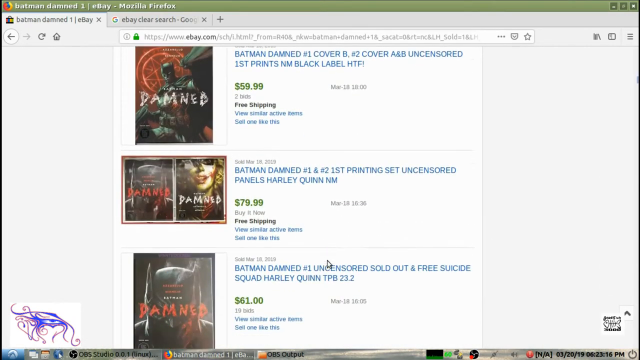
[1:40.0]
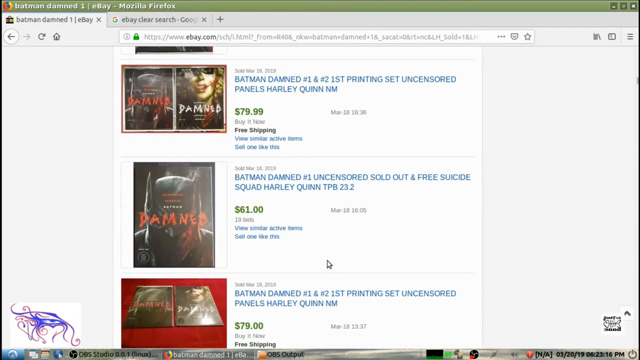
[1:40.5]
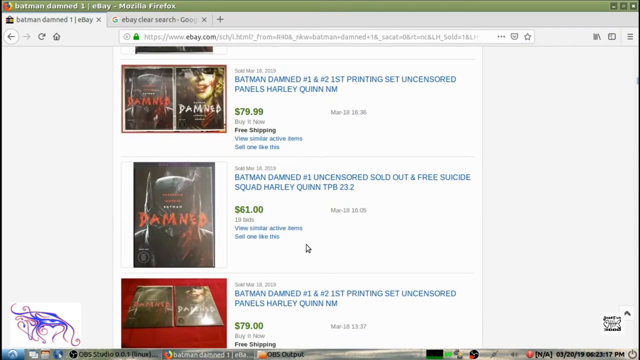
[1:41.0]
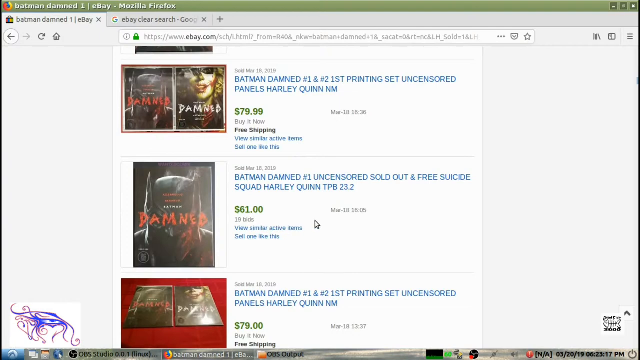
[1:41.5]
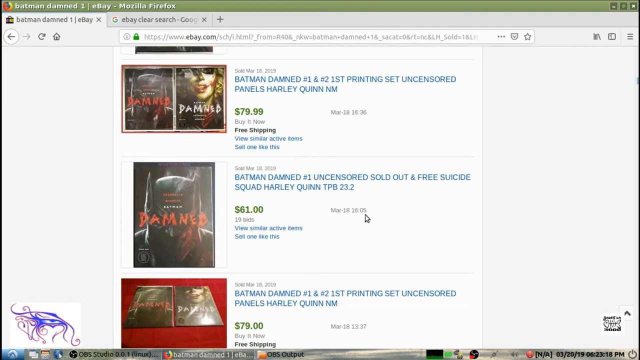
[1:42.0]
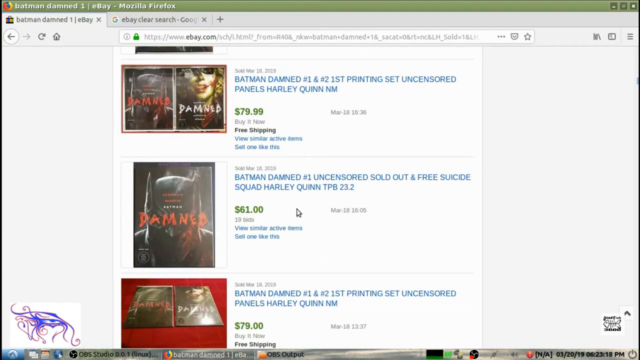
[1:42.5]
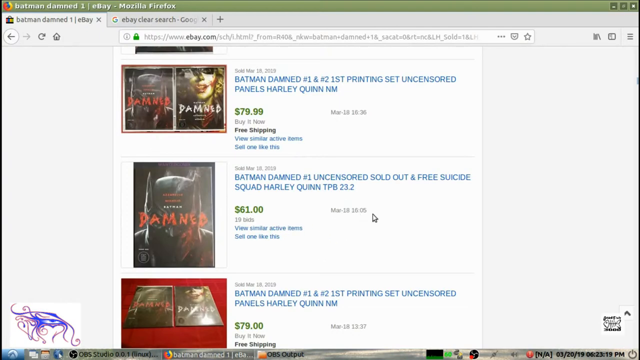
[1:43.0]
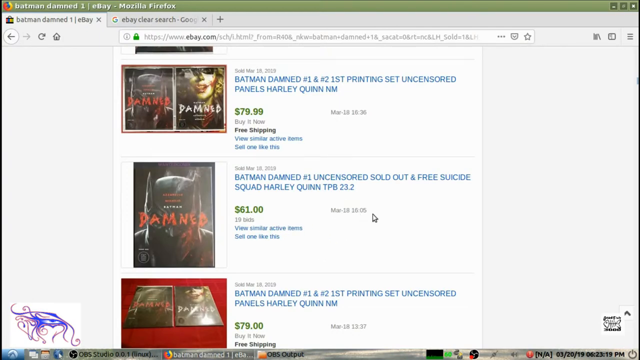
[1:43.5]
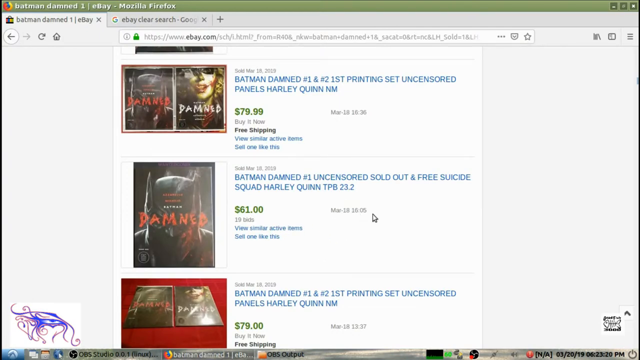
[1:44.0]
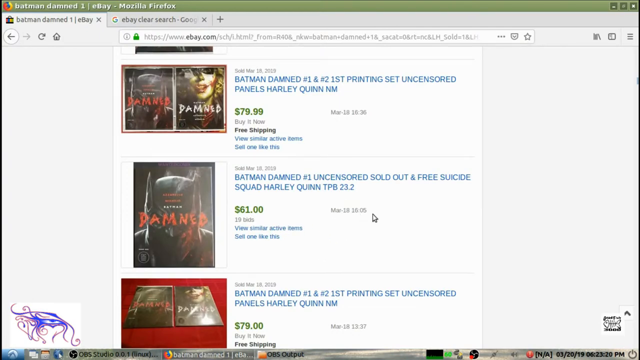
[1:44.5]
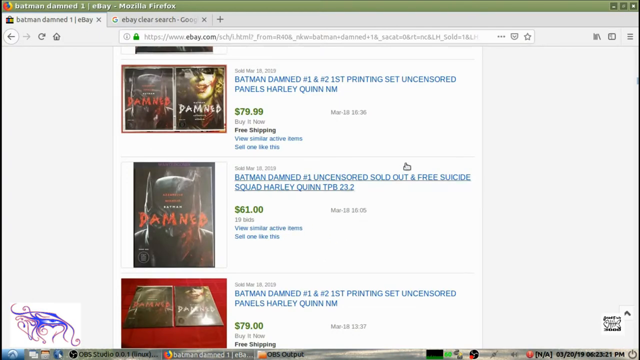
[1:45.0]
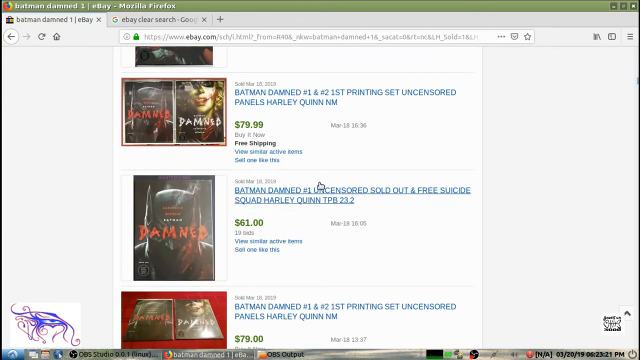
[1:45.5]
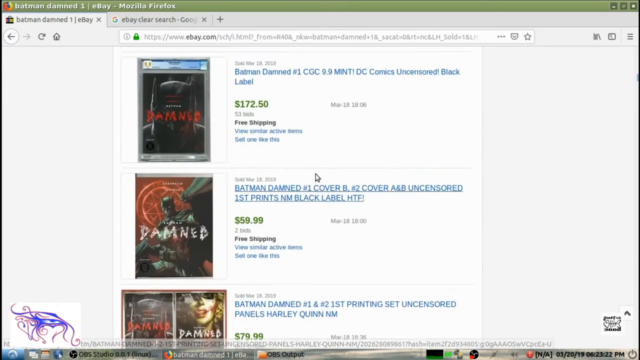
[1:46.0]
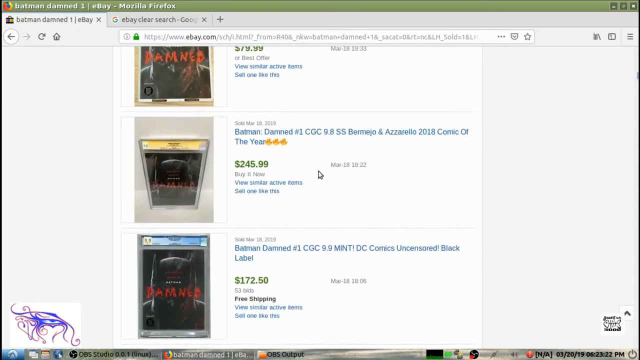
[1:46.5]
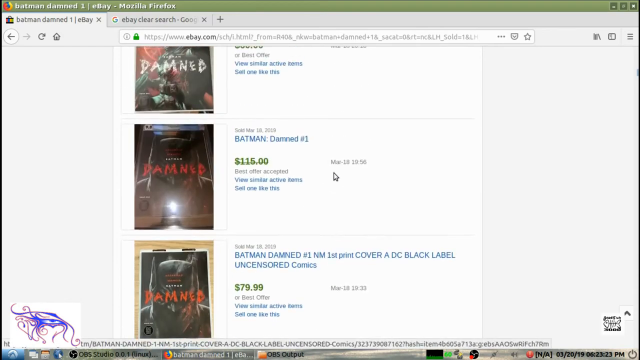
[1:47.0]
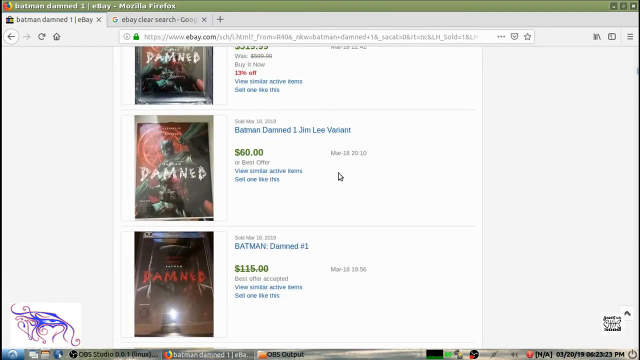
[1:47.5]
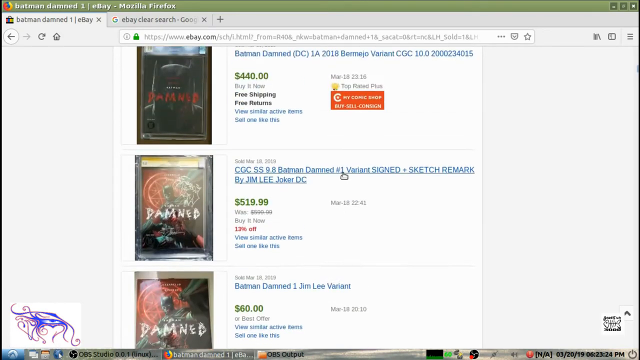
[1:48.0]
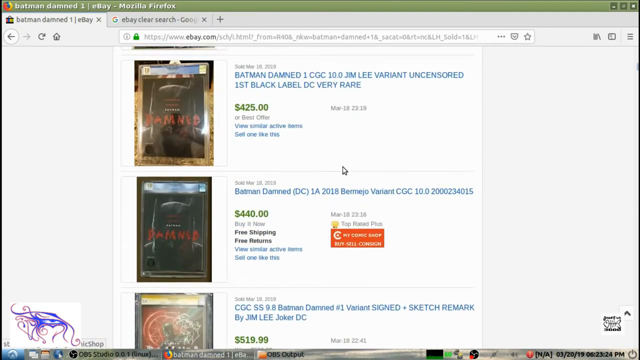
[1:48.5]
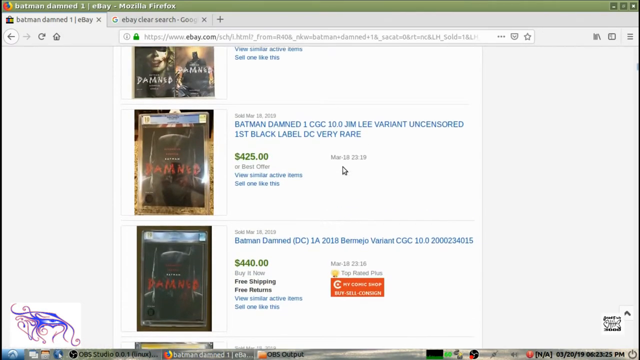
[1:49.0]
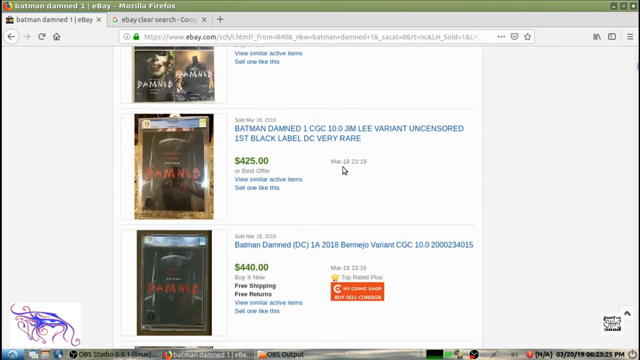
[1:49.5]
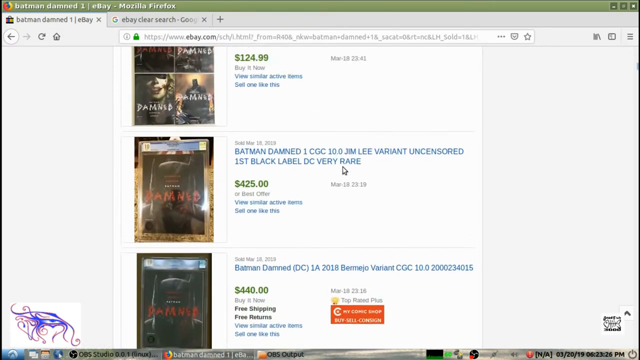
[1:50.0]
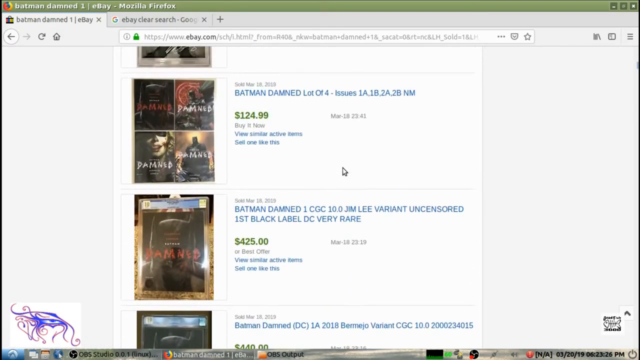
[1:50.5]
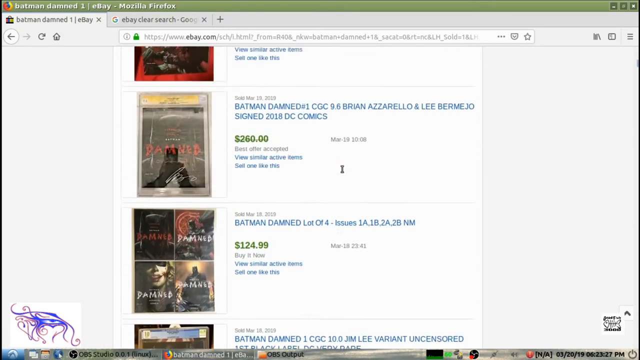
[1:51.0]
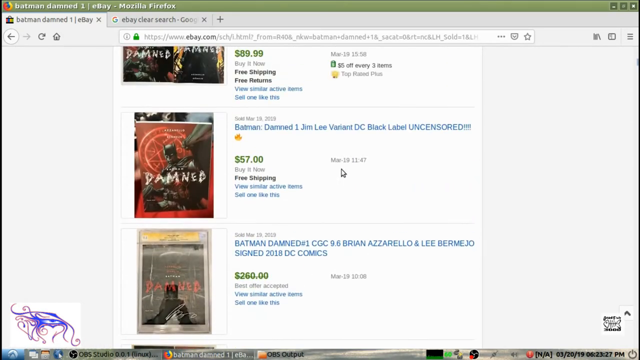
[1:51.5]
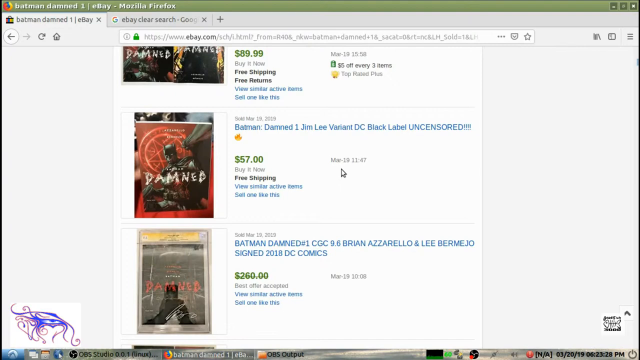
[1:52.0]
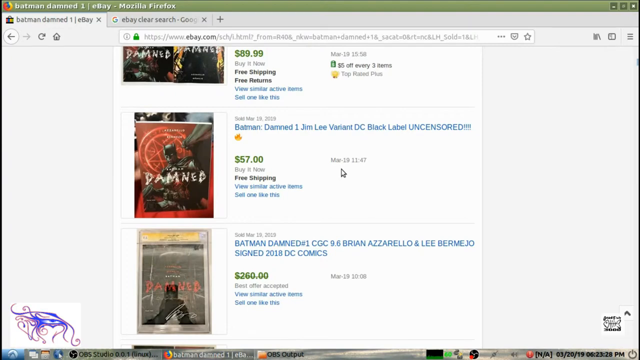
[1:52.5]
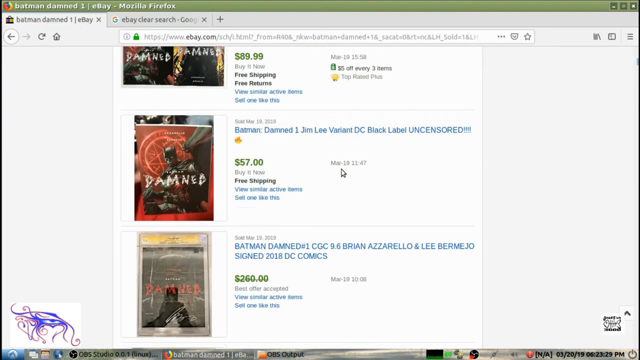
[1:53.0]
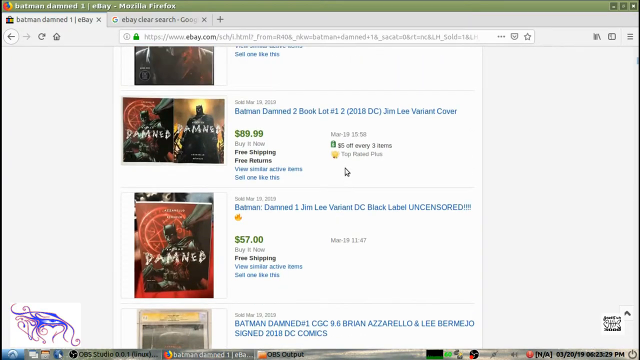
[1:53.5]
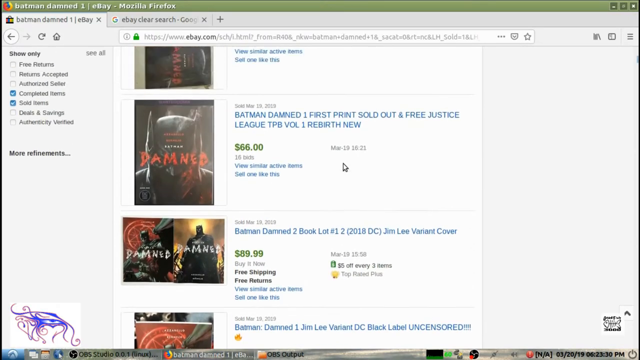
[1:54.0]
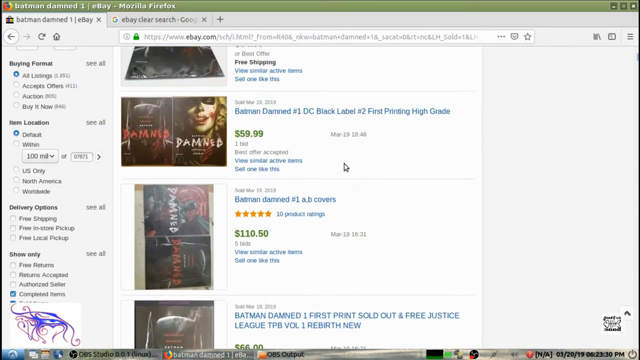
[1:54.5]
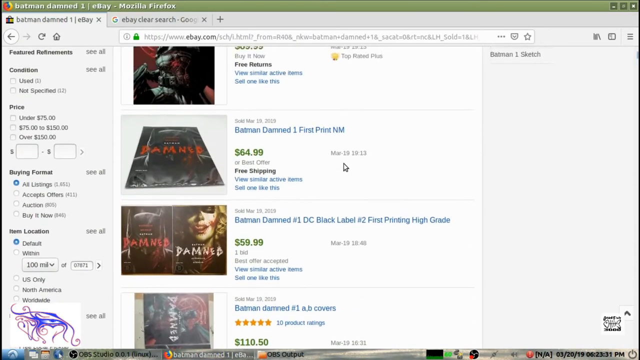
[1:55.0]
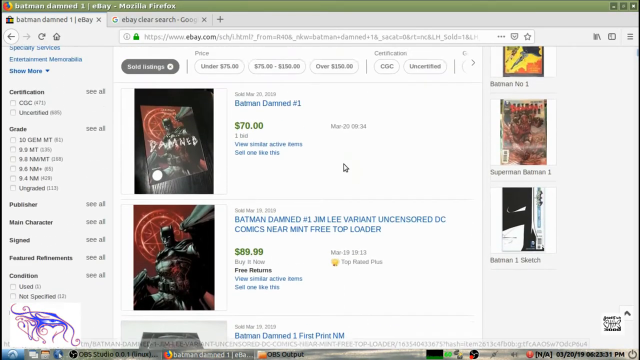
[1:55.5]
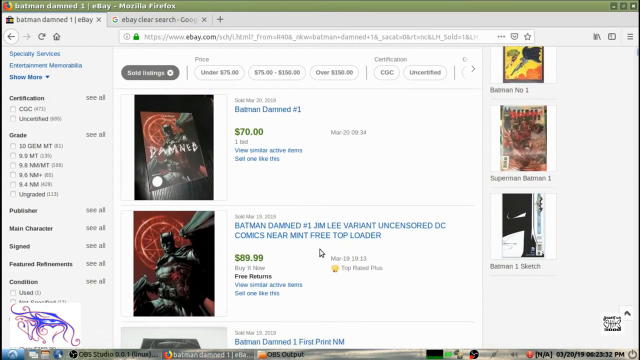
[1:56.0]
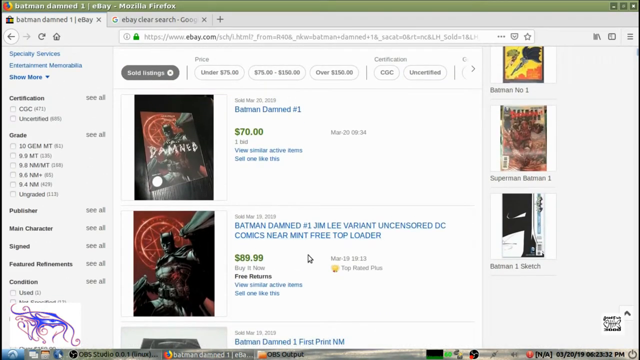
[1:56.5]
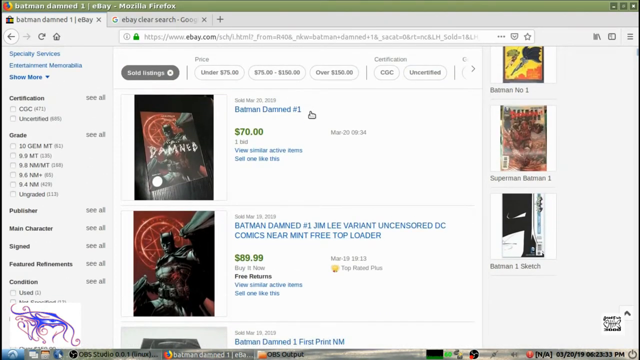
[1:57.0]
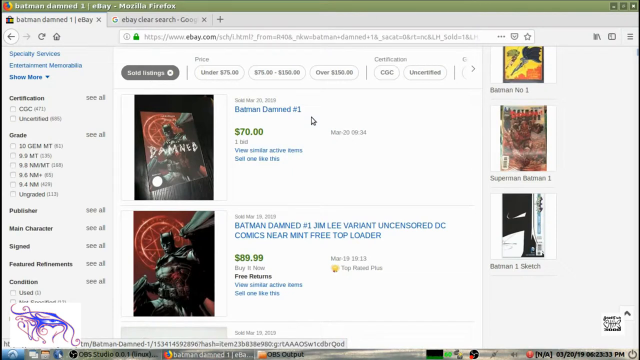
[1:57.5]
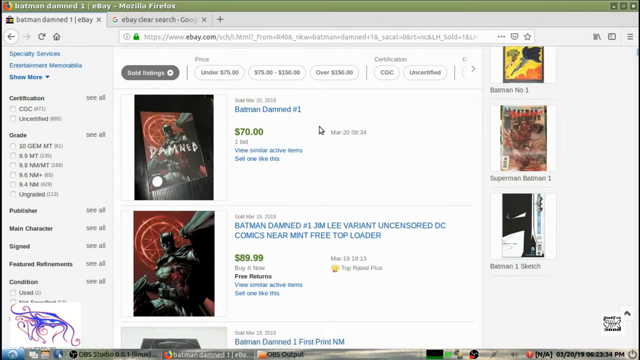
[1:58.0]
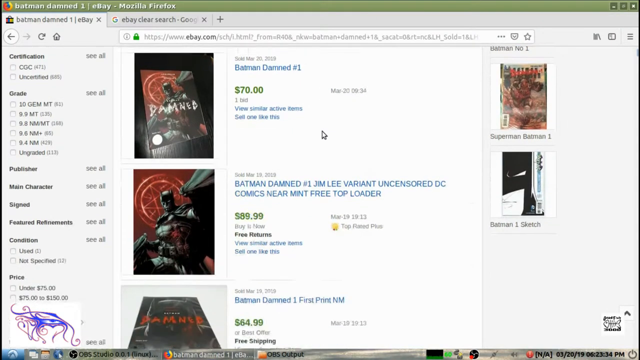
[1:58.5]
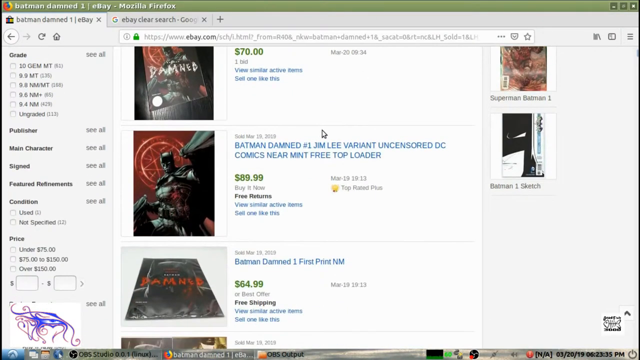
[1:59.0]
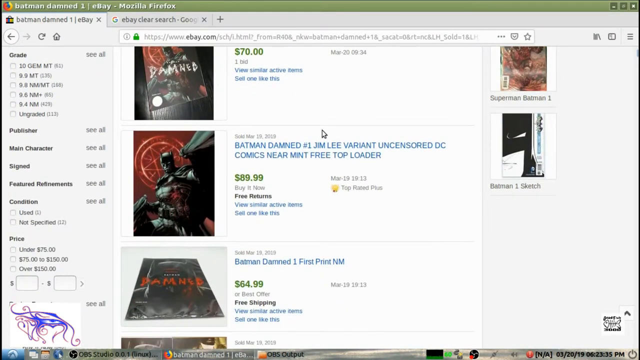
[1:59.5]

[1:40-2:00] The user keeps scrolling down through the results of sold Batman comic books and hovers the mouse pointer over one titled "Batman Damned Number 1 Uncensored Sold Out and Free Suicide Squad Harley Quinn," which sold for $61 with a total of 19 bids. The user then scrolls upward very quickly, with the results going by fast, until reaching the top of the page, where the first two results are visible. The pointer hovers over the first result, then the user scrolls down and the pointer hovers over the second result.